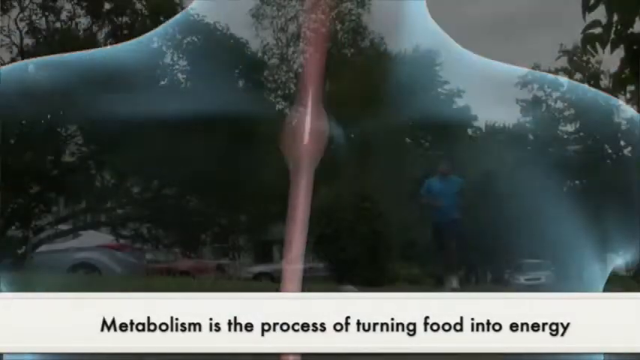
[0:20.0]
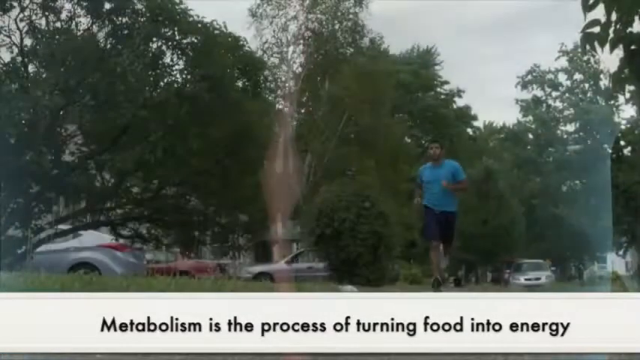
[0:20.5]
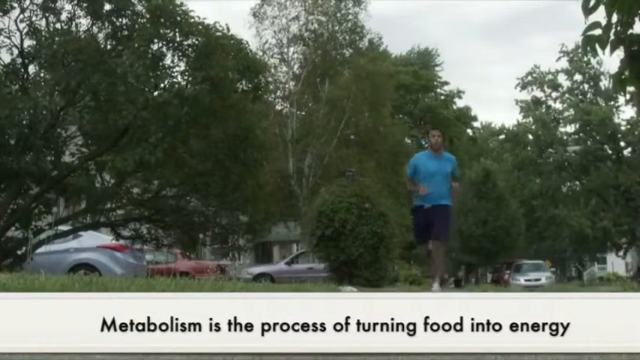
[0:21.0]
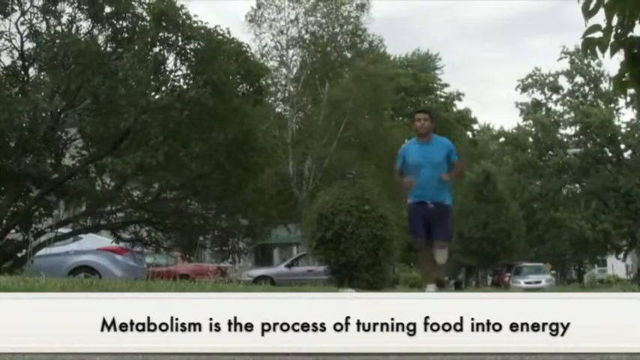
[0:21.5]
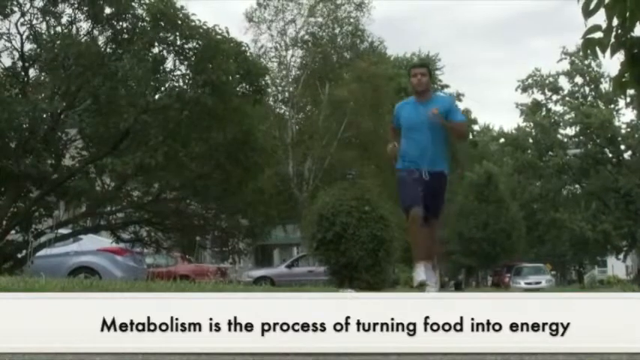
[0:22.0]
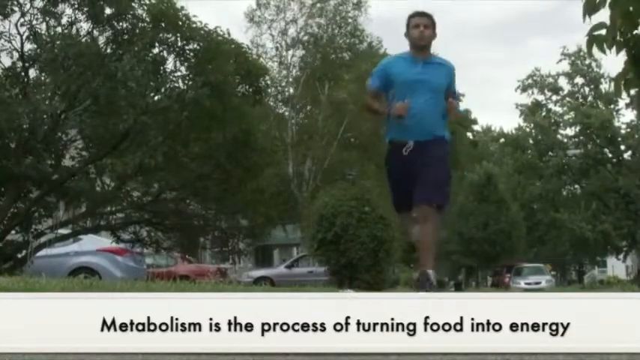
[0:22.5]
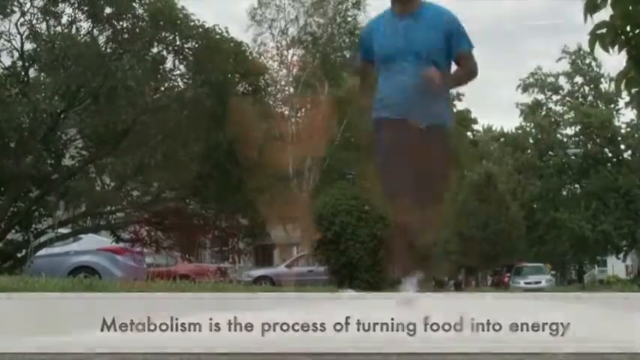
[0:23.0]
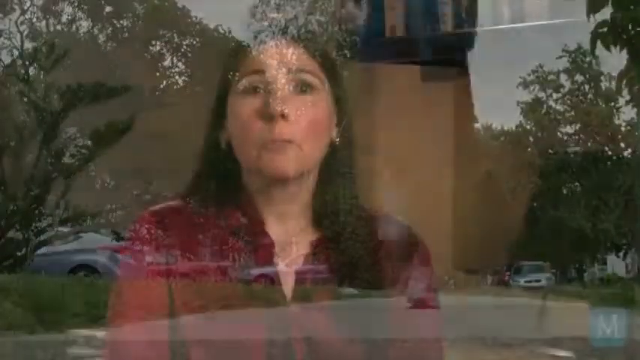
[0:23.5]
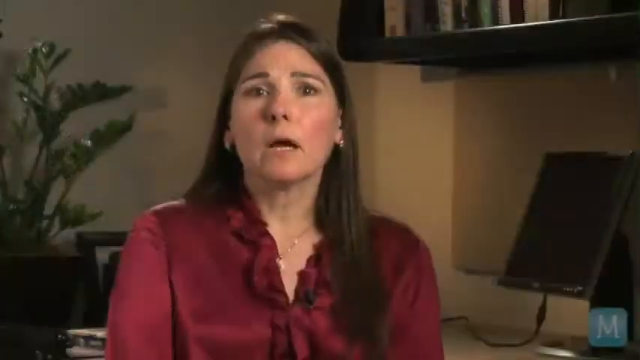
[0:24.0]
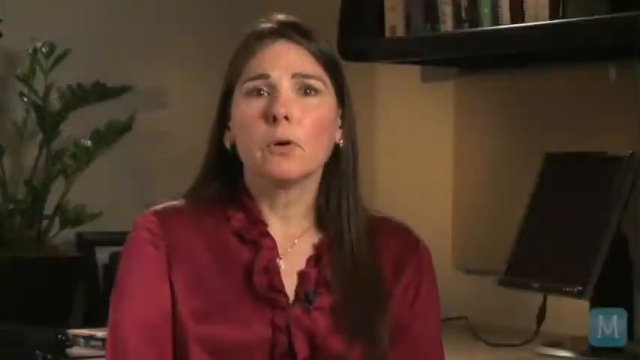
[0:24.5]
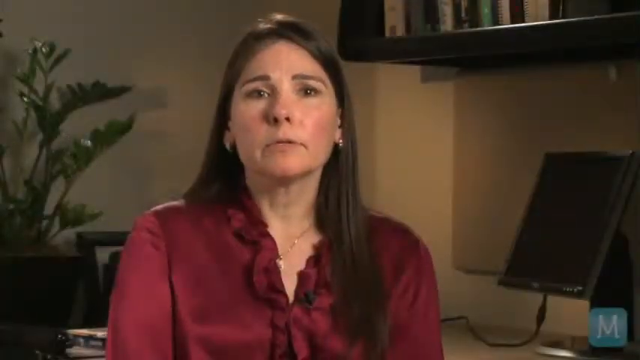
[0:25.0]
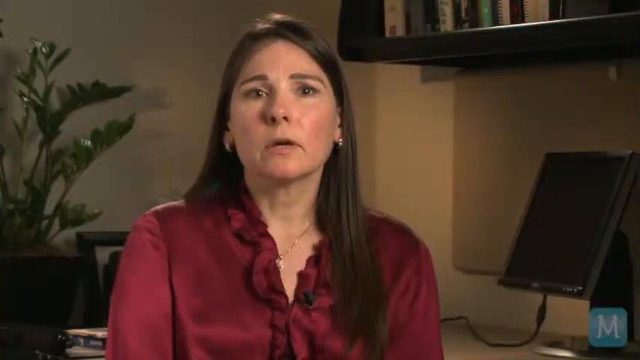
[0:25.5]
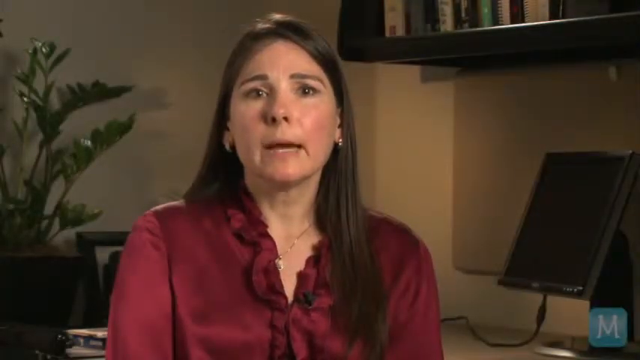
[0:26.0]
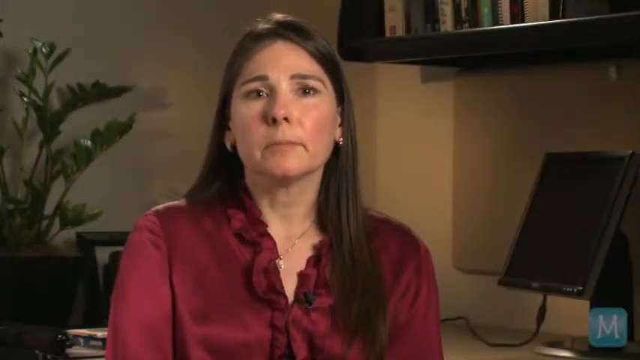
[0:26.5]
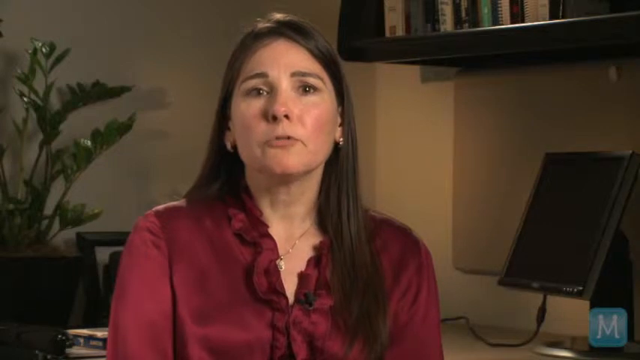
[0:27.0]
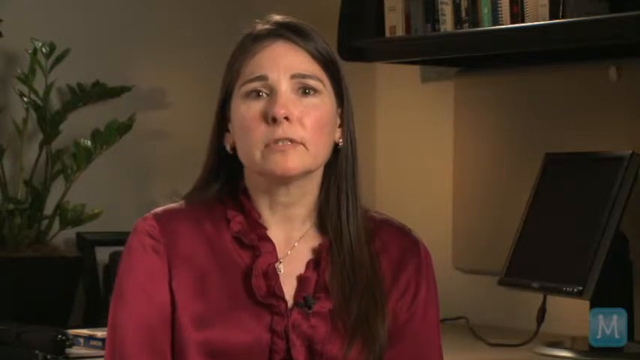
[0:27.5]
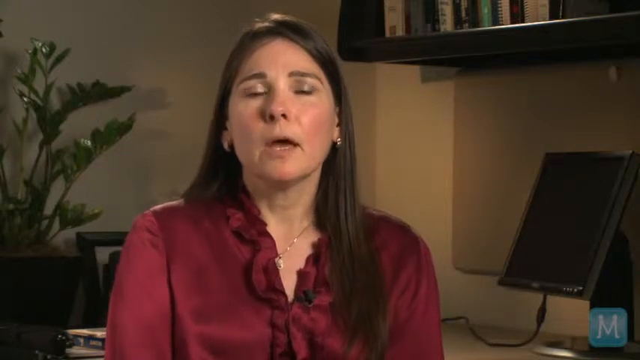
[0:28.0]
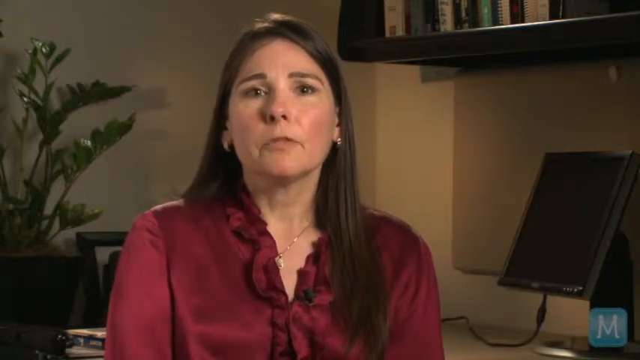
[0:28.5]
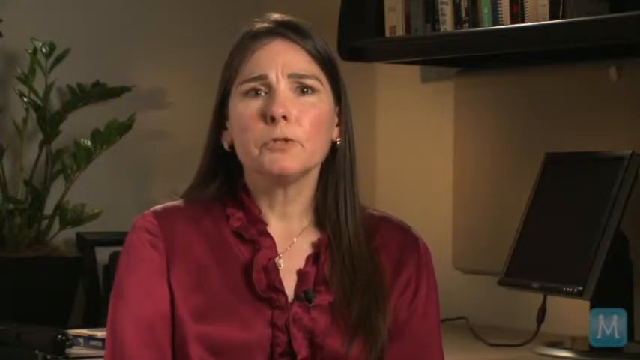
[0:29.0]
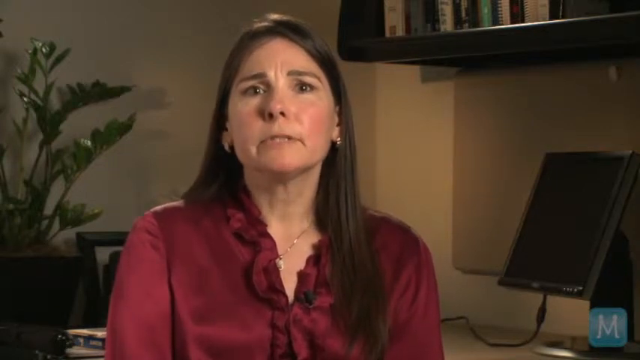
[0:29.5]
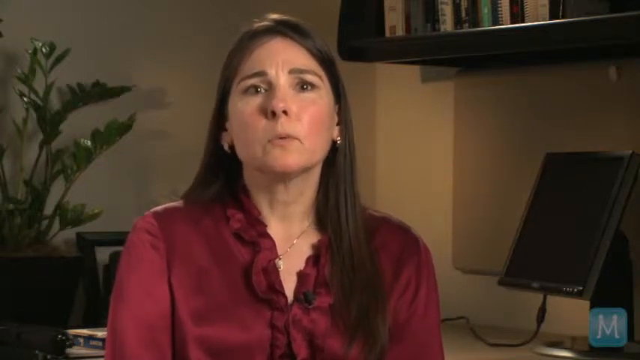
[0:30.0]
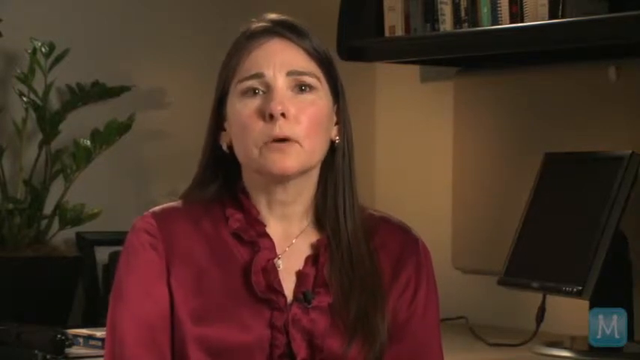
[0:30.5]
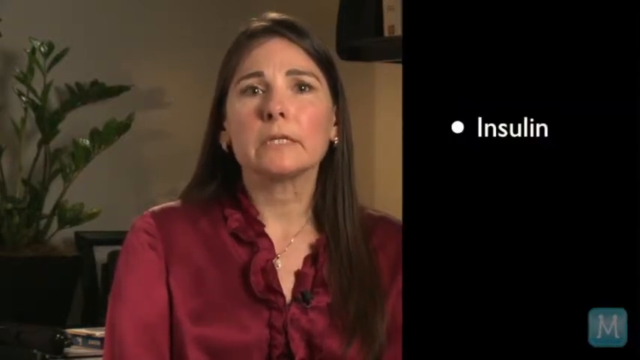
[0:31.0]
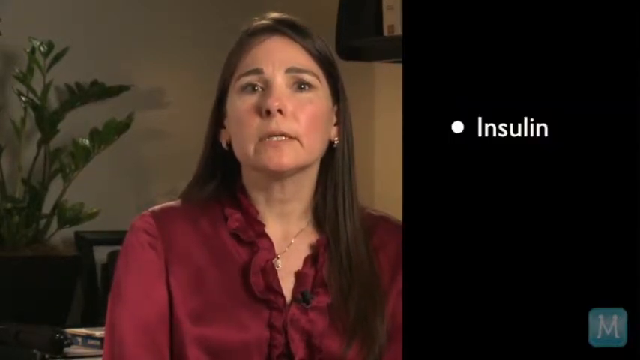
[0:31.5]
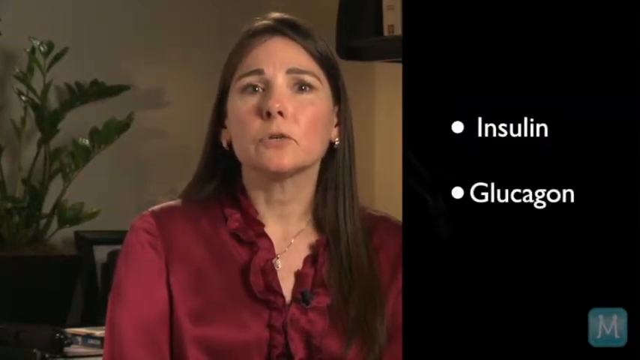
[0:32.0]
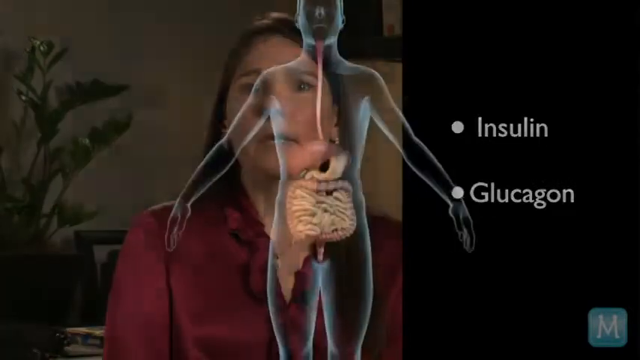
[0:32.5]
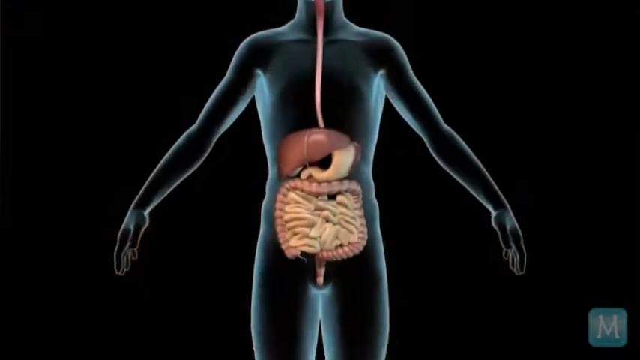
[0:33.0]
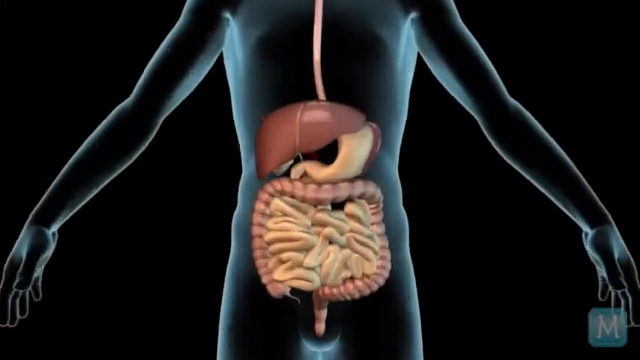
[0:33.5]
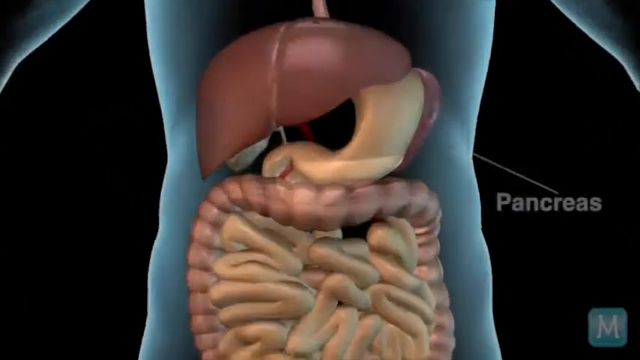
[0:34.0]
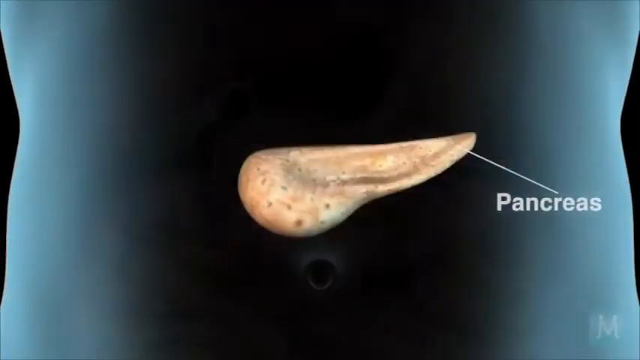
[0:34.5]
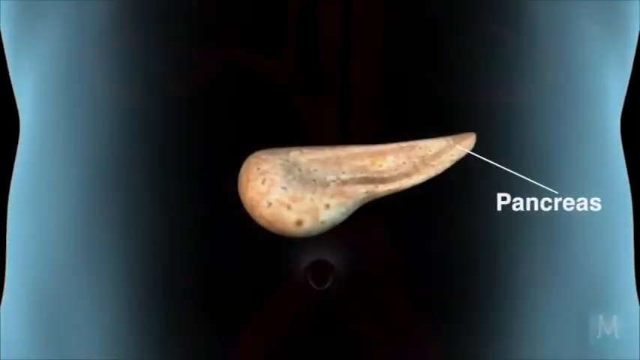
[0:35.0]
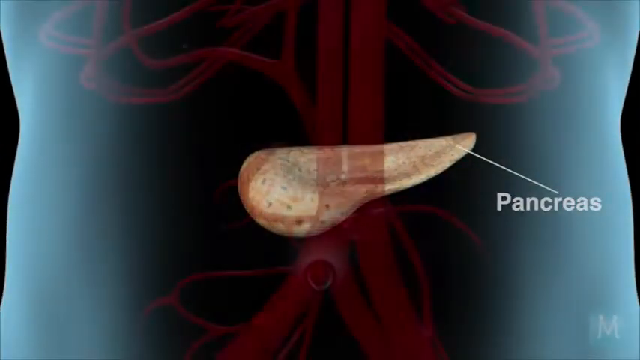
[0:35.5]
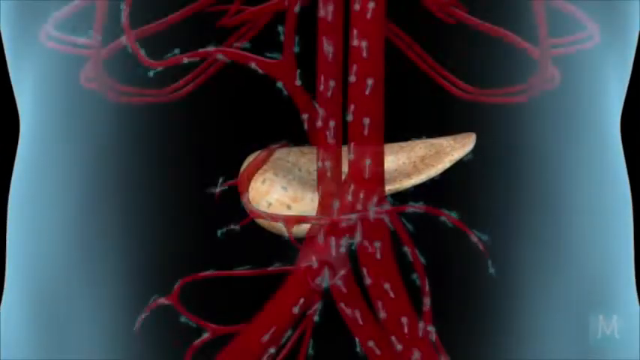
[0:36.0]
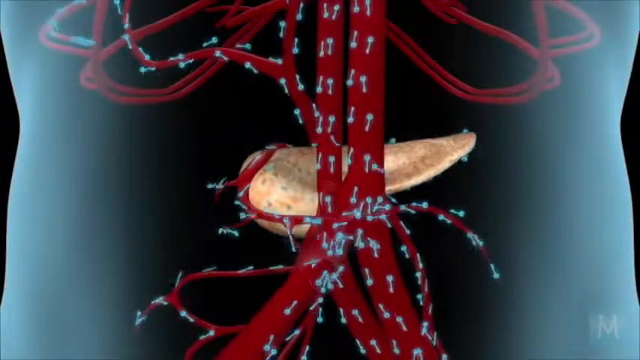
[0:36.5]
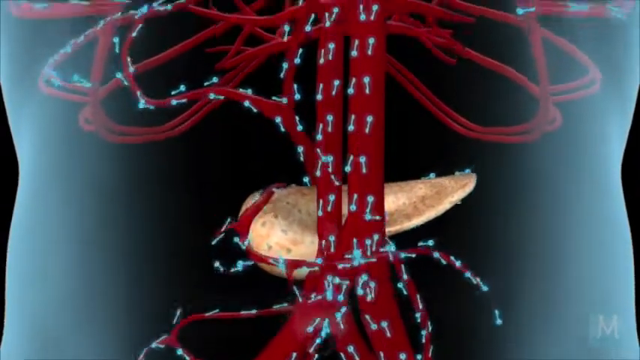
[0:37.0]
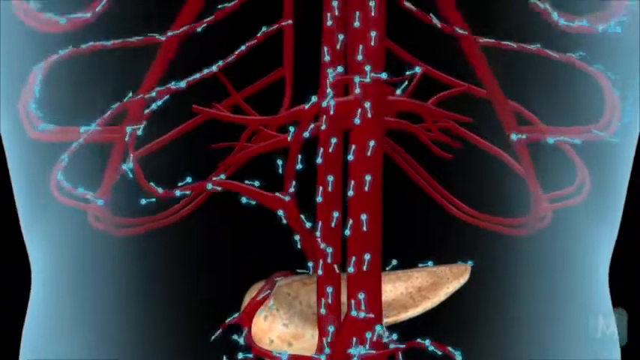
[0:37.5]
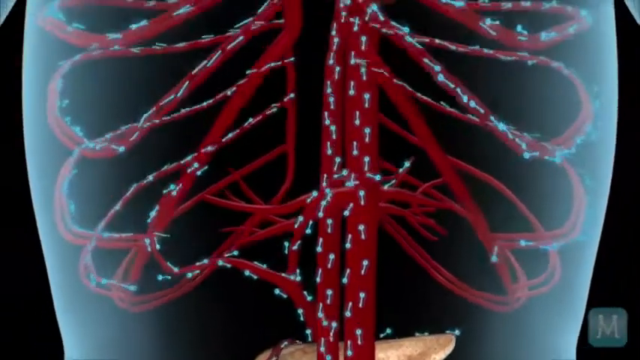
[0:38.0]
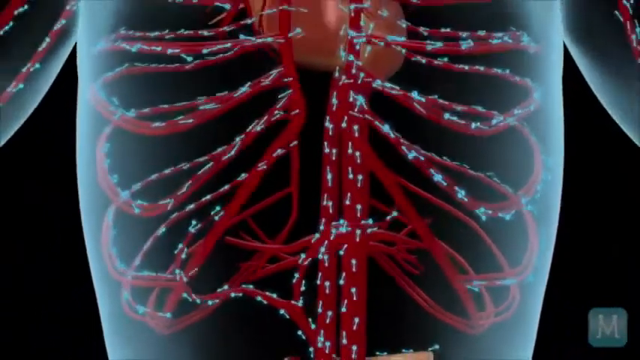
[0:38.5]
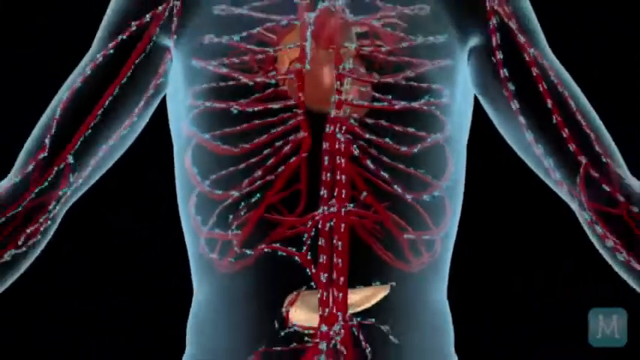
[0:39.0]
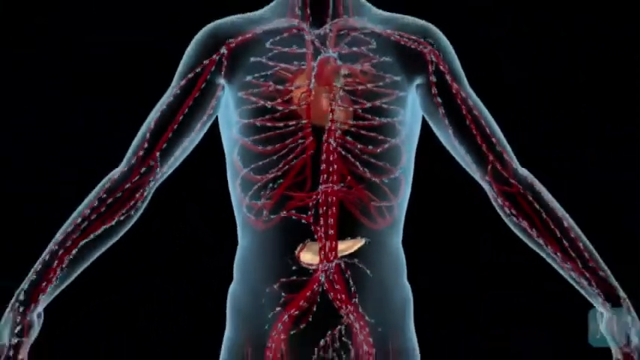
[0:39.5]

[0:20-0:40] A person who seems to be male runs outside, wearing a blue shirt and blue shorts, with a bunch of trees surrounding him. Below, text says "metabolism is the process of turning food into energy." The video transitions to a woman talking to the camera in what appears to be an office. She appears to be an older woman with brown hair and is wearing a red shirt. As she continues talking, bullet points appear, including insulin and glucagon. The video then transitions to an outline of a person's intestinal tract, with the stomach, small intestine, large intestine and esophagus highlighted. It zooms into the pancreas, showing and labeling it, and then shows different systems happening around the pancreas, which look like the bloodstream in the body.